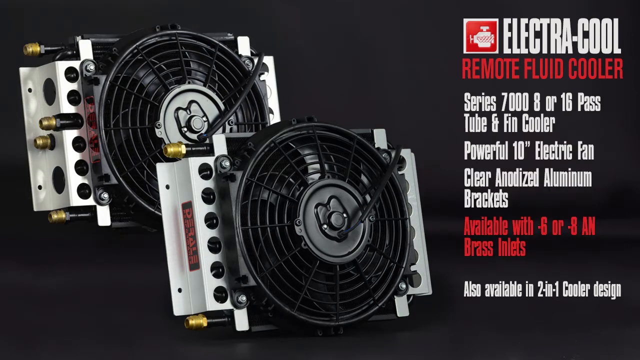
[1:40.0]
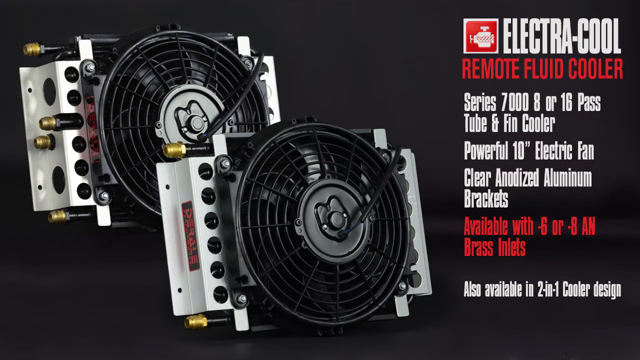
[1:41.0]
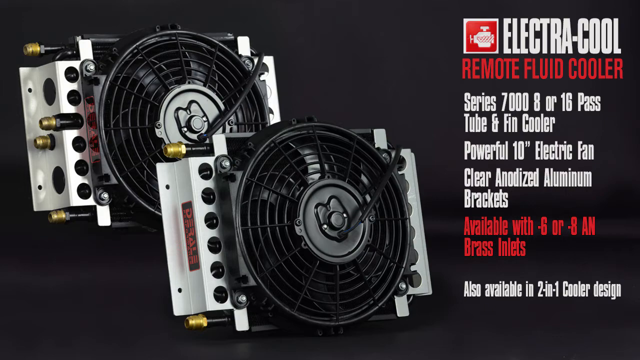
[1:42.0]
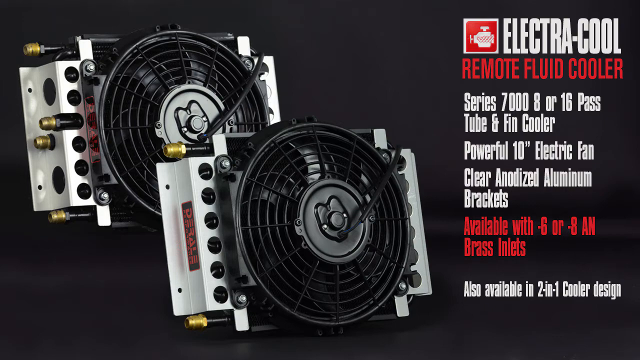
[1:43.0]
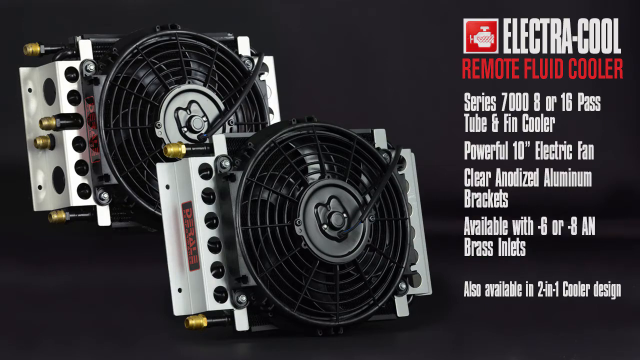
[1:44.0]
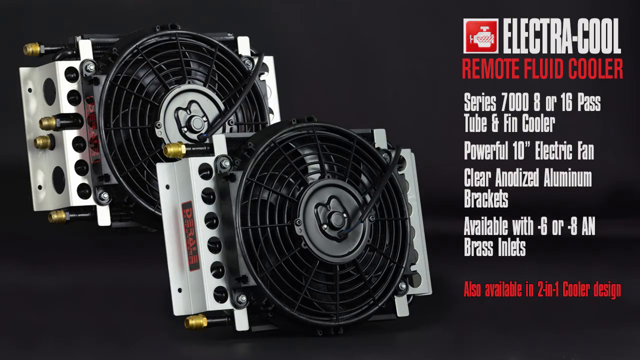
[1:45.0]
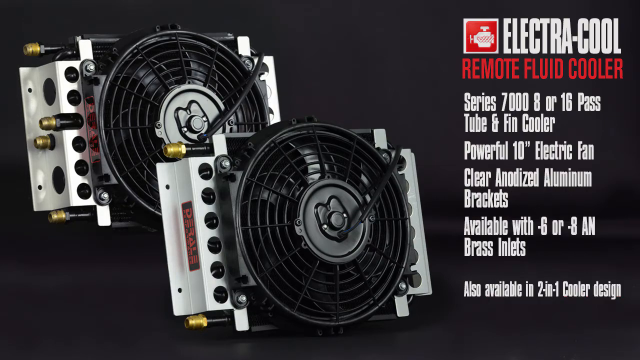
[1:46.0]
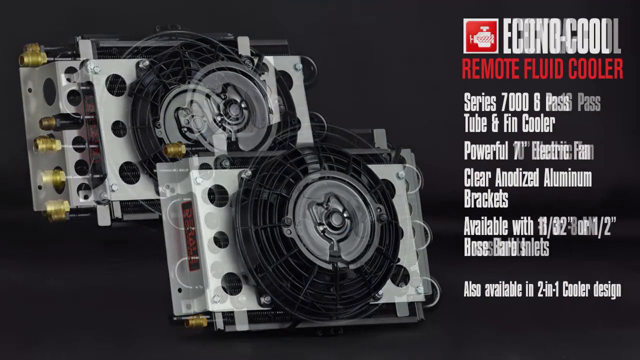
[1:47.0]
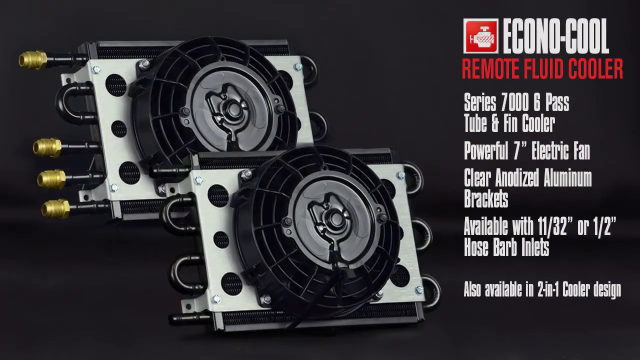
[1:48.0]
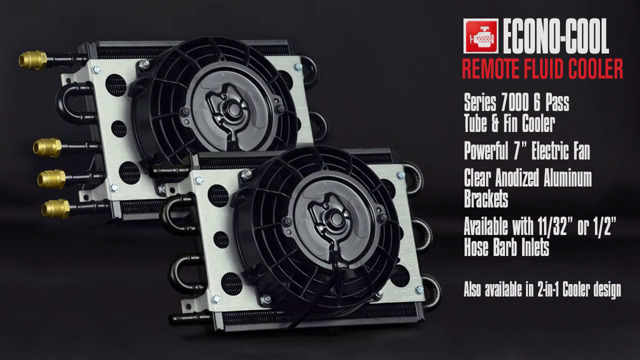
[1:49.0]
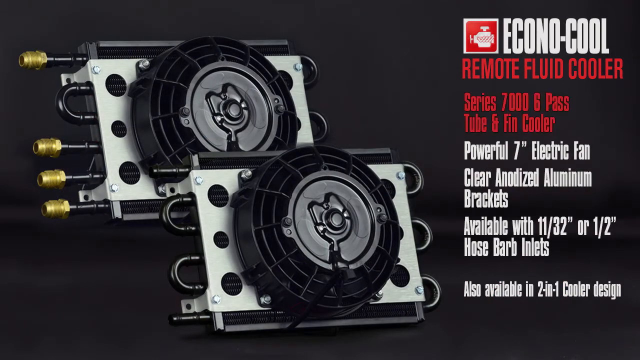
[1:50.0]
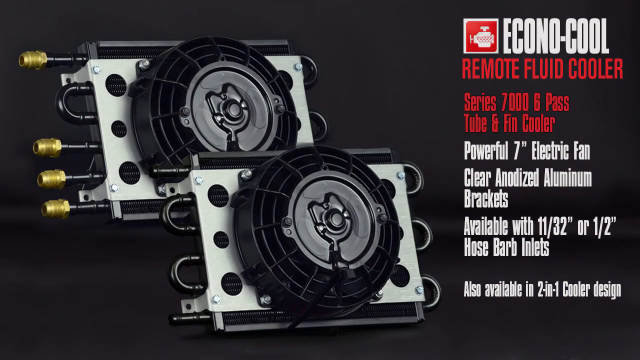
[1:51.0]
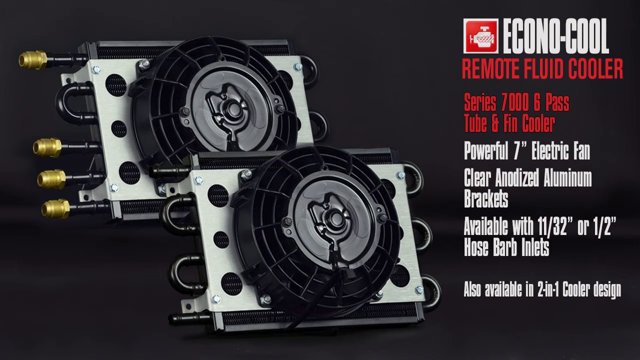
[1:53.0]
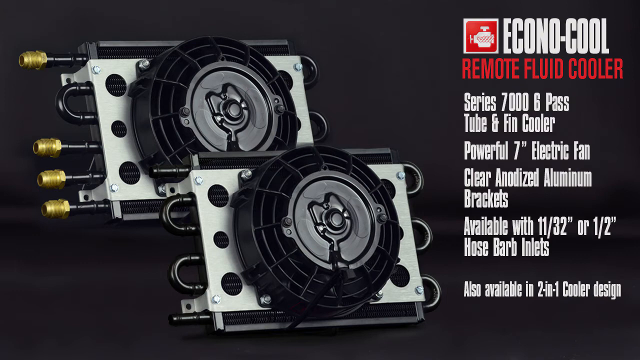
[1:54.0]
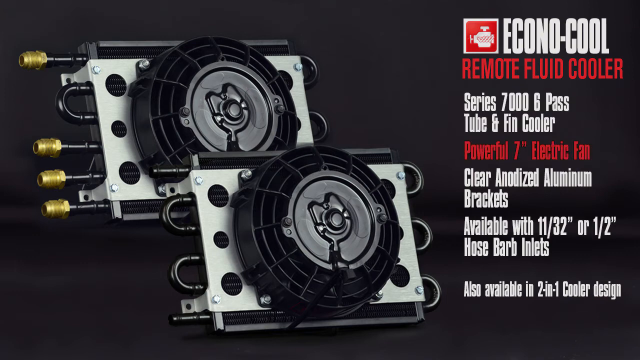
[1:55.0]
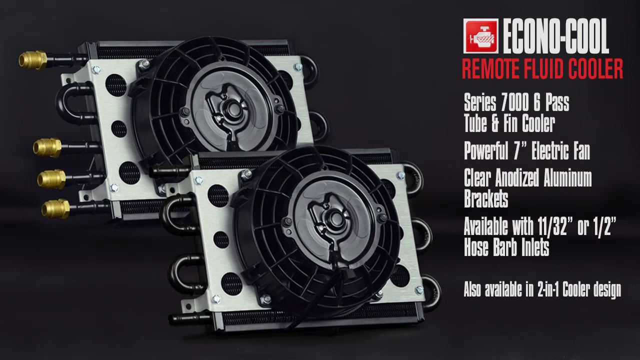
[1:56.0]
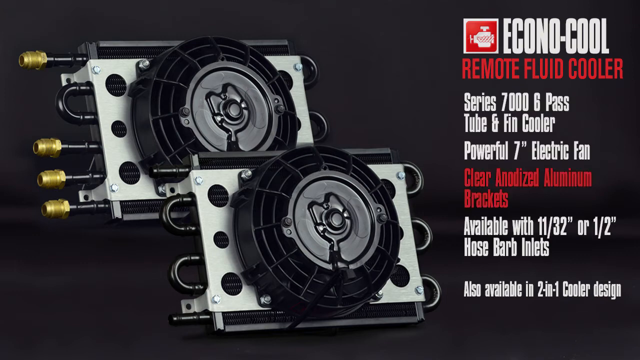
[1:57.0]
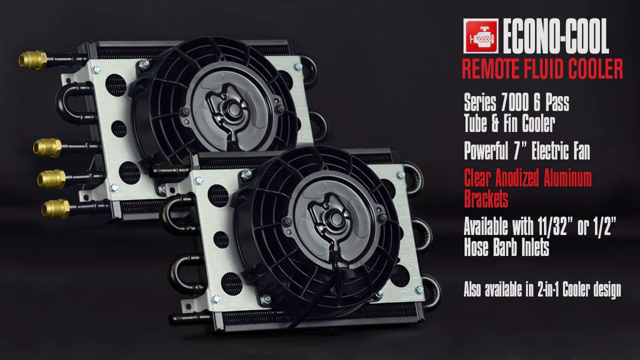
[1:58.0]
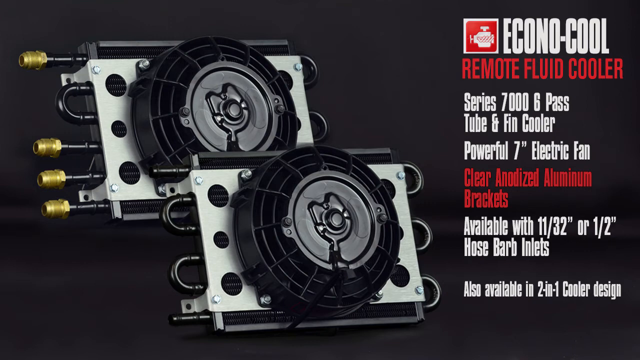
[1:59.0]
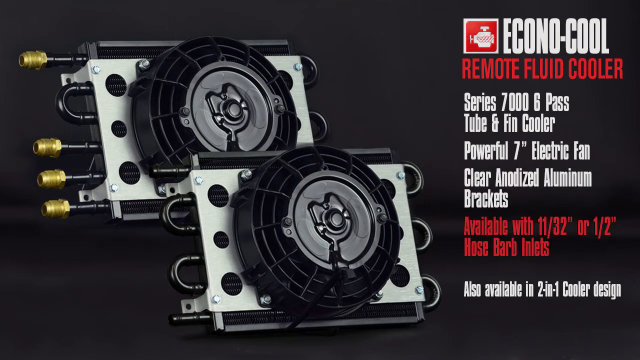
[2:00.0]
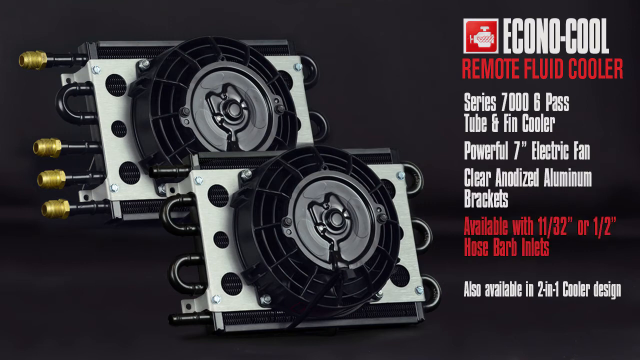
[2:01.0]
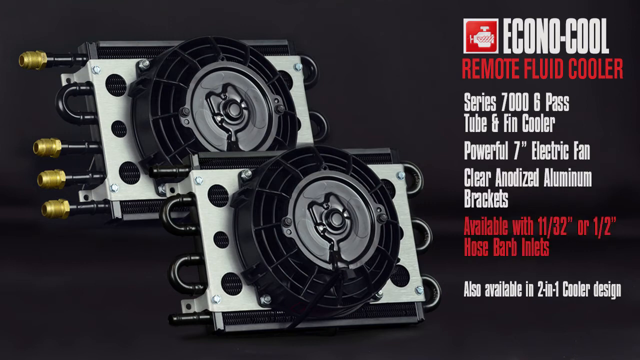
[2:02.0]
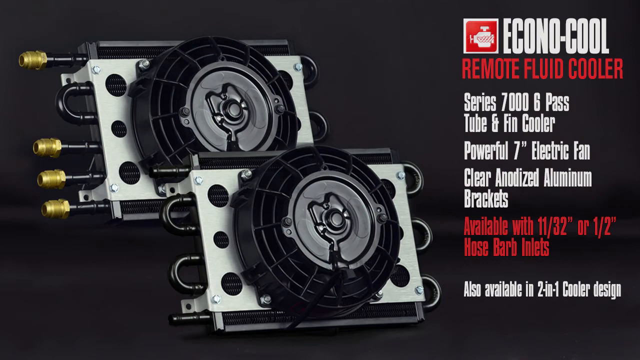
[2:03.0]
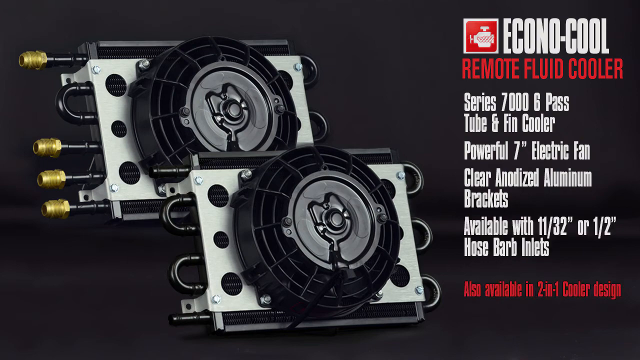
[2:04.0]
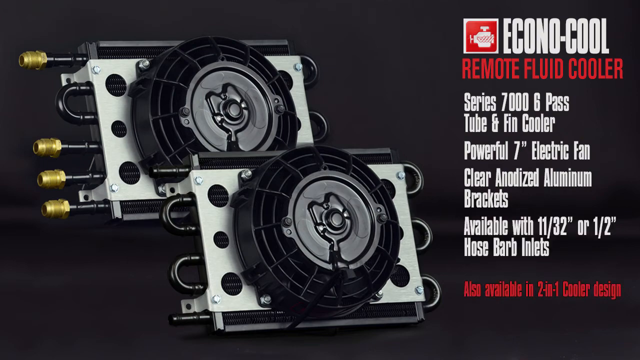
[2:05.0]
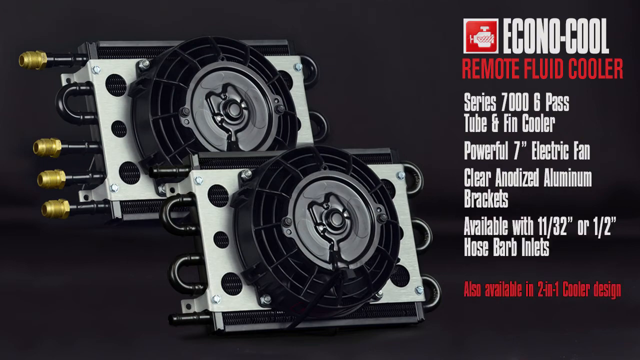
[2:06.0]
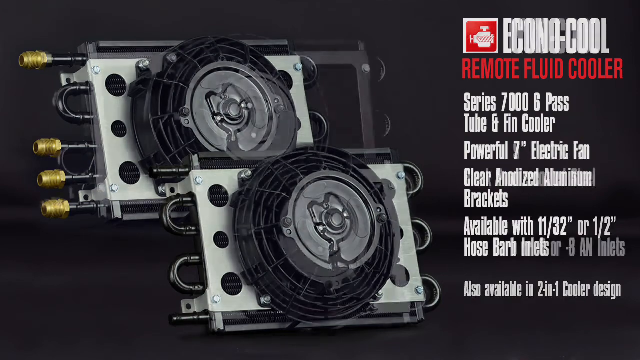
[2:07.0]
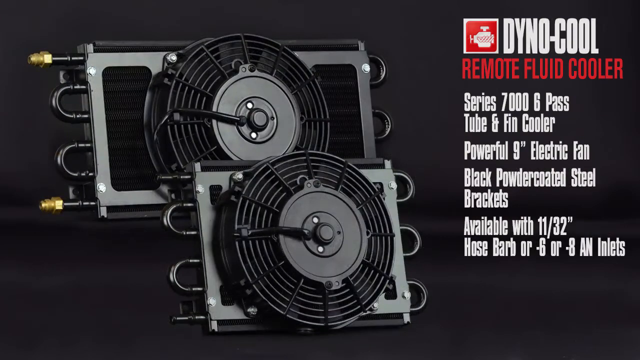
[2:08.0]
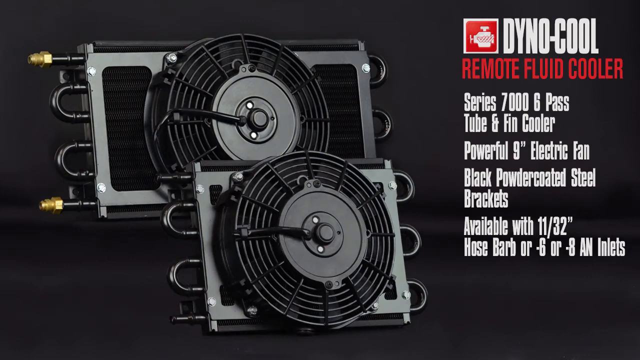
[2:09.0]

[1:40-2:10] Two coolers are shown again against a black background, described as the "series 7000 8 or 16 pass tube and fin cooler with a powerful 10 inches electric fan, clear anodized aluminum brackets, available with minus 6 or minus 8 AN brass inlets, also available in two in one cooler design". These two remote fluid coolers are different sizes. Another two follow, the "series 7000 6 pass tube and fin cooler with powerful 7 inches electric fan, clear anodized aluminum brackets", with hose barb inlets and also available in a two in one cooler design. The designs appear again on the black background, and then another design from the series 7000 appears, seemingly another version of the same series. As each characteristic is shown, its white letters turn red.